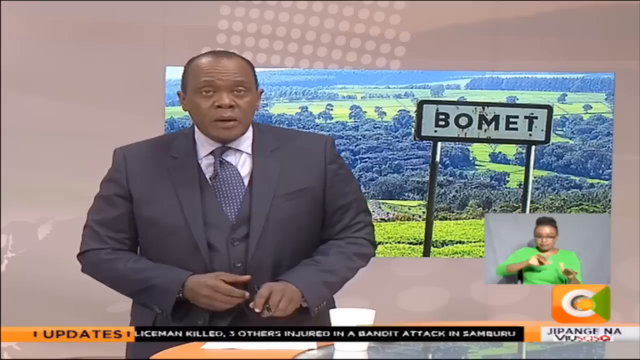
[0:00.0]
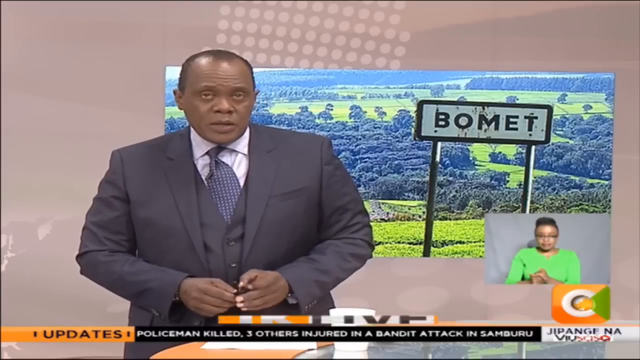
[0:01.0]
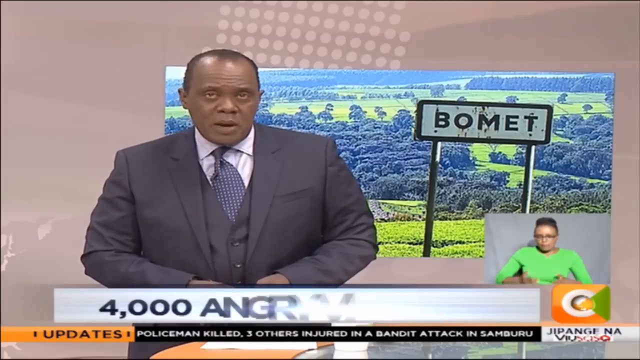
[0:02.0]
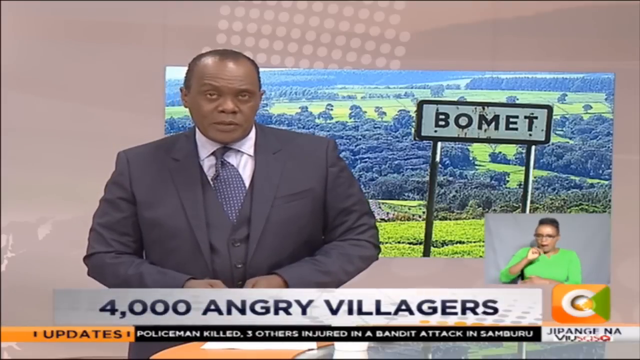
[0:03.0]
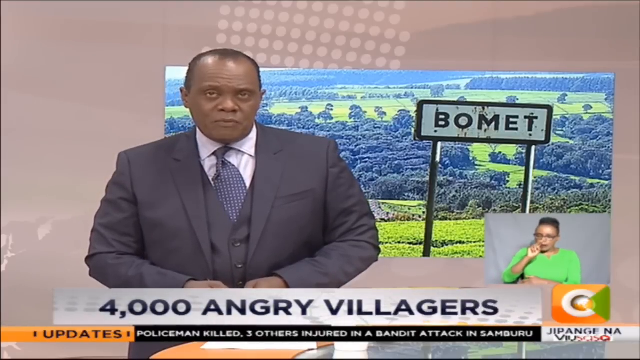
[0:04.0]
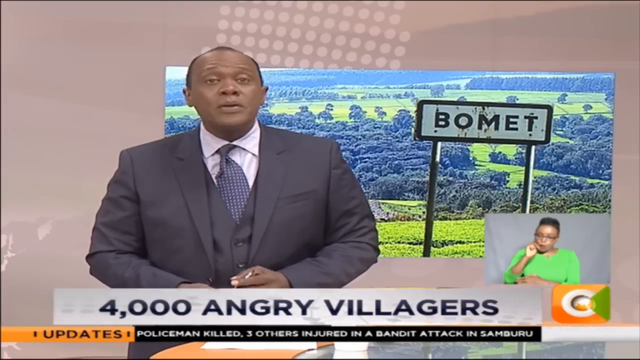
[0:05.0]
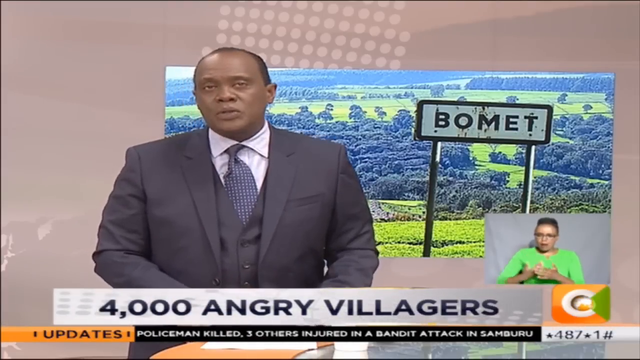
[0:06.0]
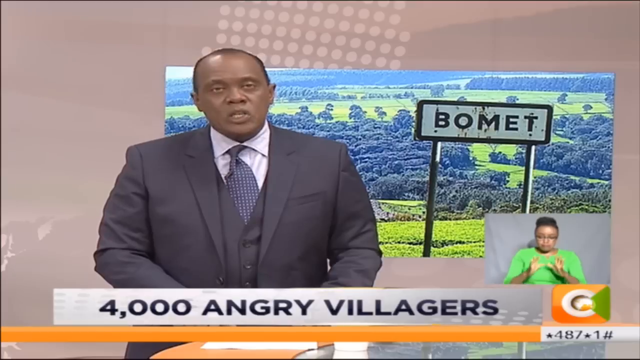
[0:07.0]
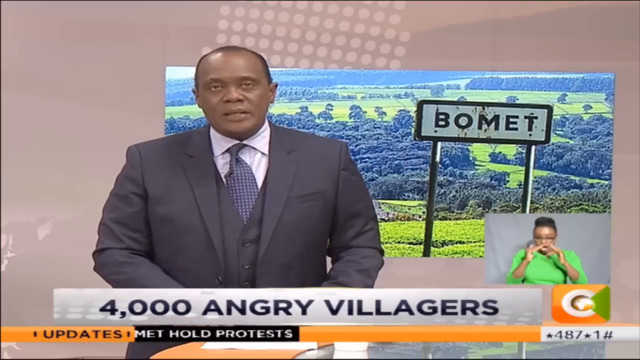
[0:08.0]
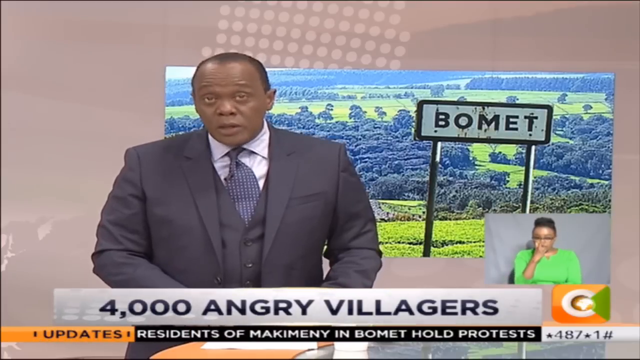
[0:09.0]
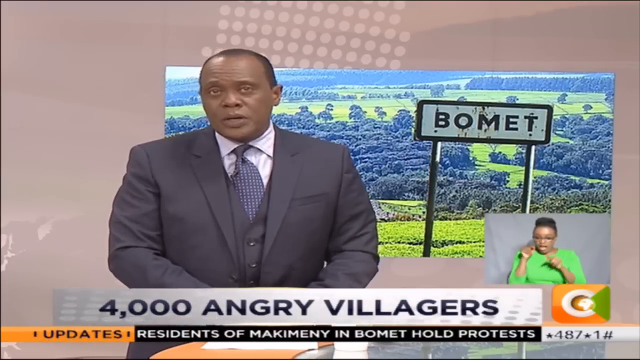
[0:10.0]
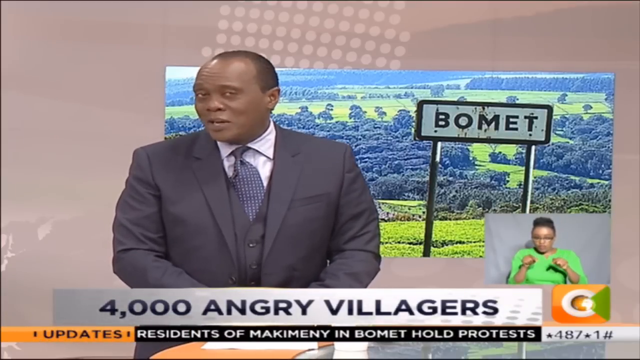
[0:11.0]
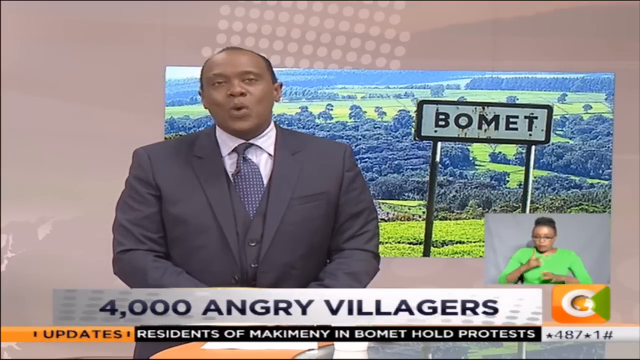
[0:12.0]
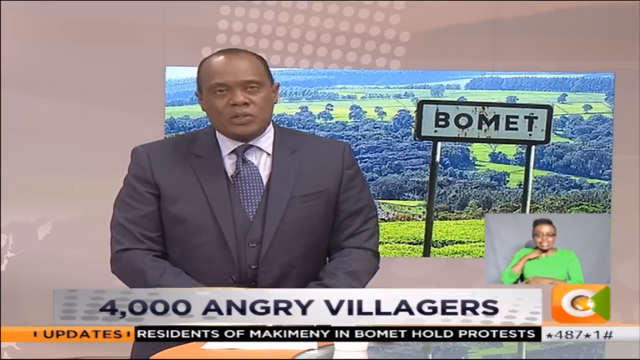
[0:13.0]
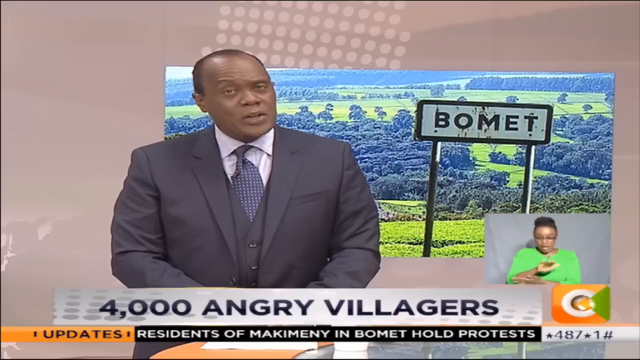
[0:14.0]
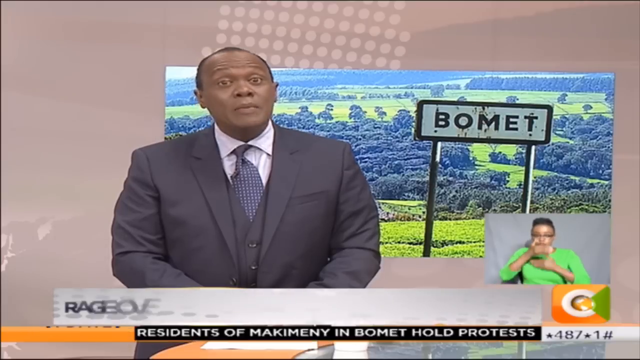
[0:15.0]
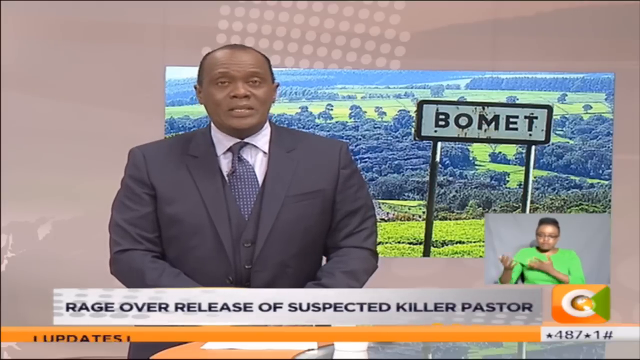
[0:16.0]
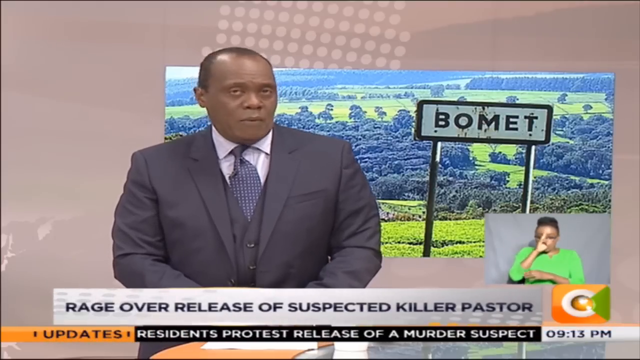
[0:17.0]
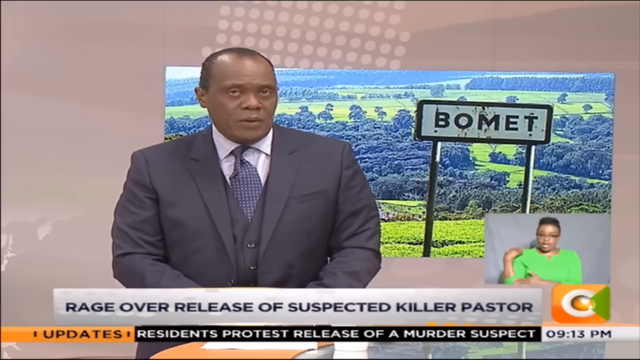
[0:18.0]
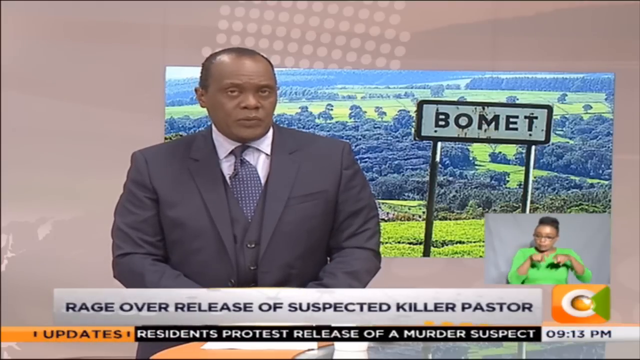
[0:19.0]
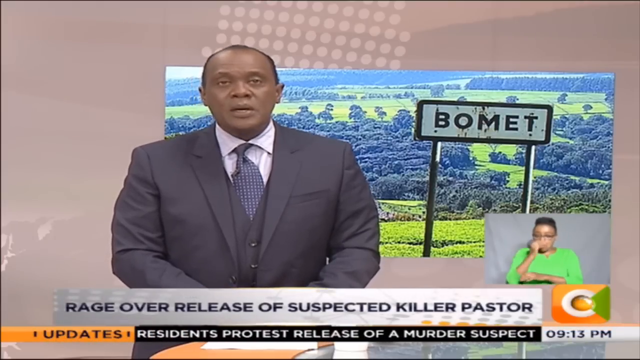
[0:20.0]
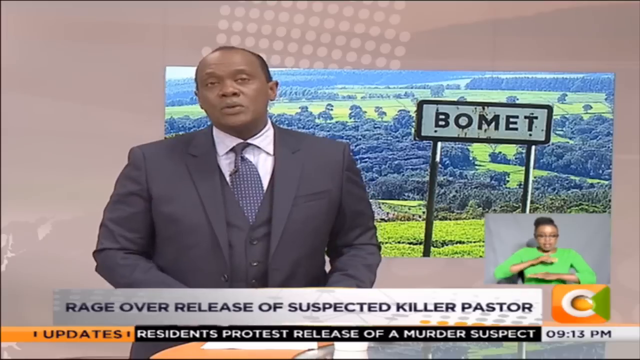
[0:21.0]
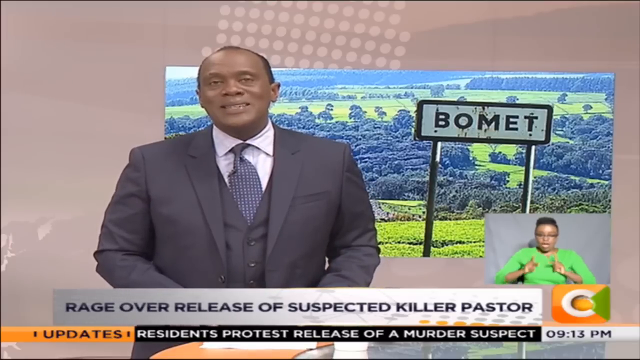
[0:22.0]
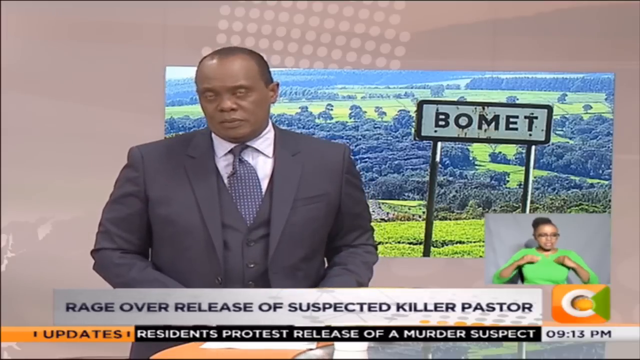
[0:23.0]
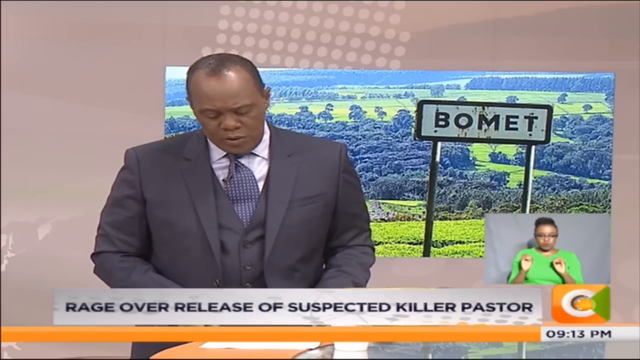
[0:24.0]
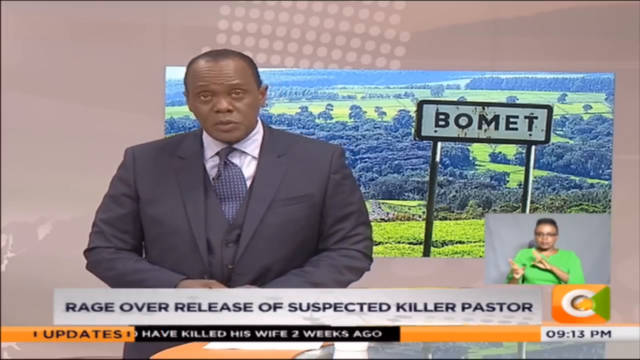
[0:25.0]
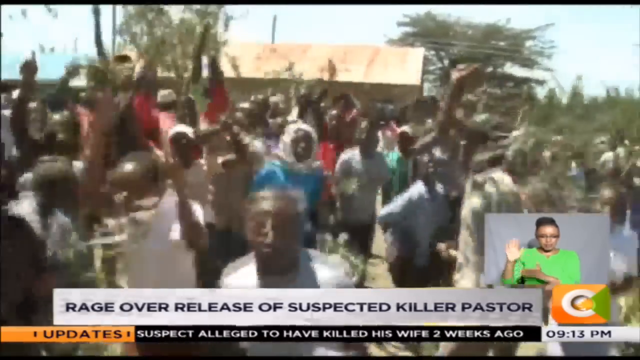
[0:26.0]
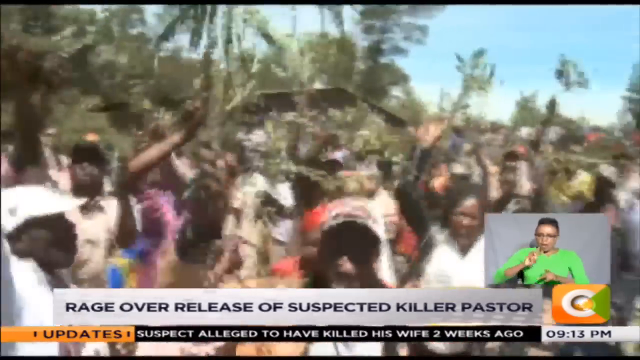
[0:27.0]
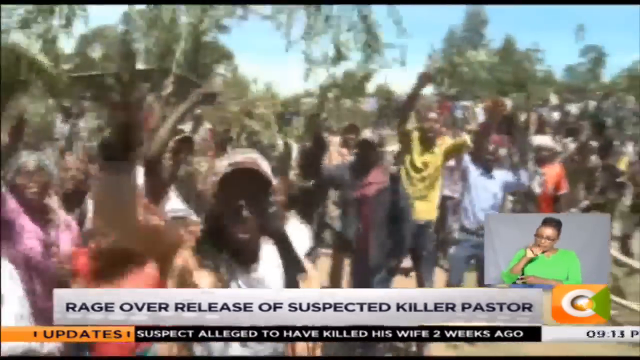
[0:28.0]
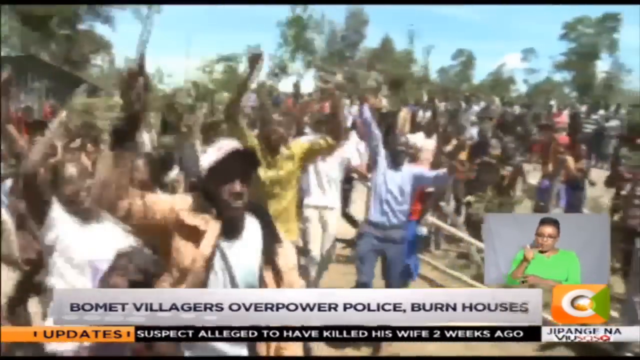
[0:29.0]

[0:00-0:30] A man dressed in a suit and tie looks towards the camera as he speaks, moving something around in his hand. Behind him is a graphic with the word "Bomet" on a sign, with trees and other scenery behind it. Behind the image and the man is a fairly plain beige background with a few stylistic additions, such as small dots. The man continues to speak towards the camera. In the bottom right, a woman in a green shirt provides a sign language translation throughout. The title at the bottom reads "4,000 Angry Villagers" before changing to "Rage Over Release of Suspected Killer Pastor". The scene then changes to a large group of people who look very agitated or excited, throwing things in the air and jumping up and down while waving branches and other items in the air.